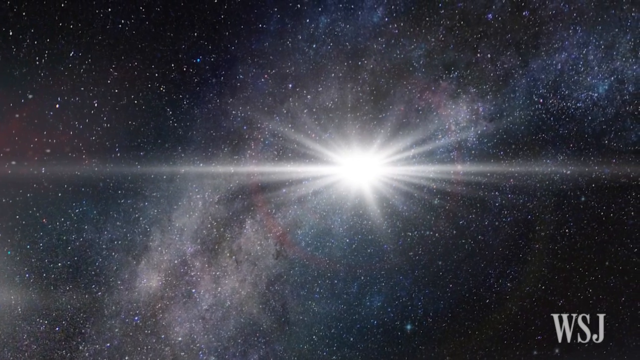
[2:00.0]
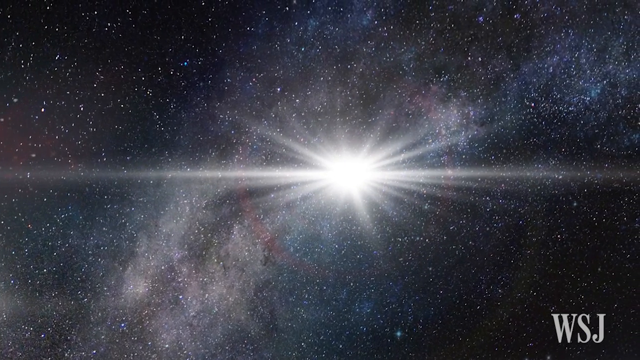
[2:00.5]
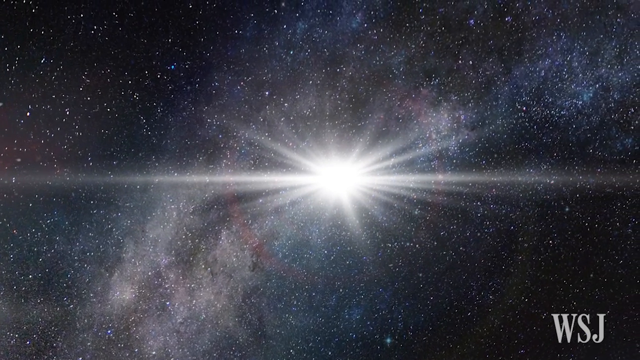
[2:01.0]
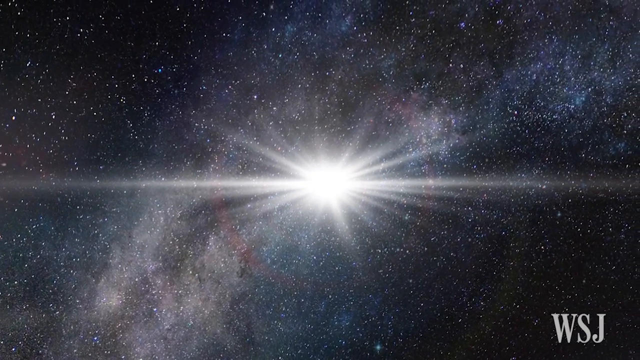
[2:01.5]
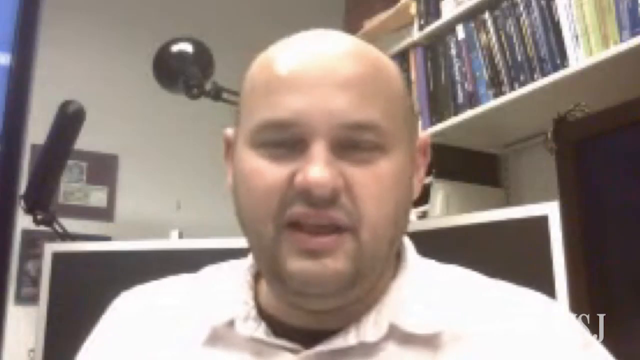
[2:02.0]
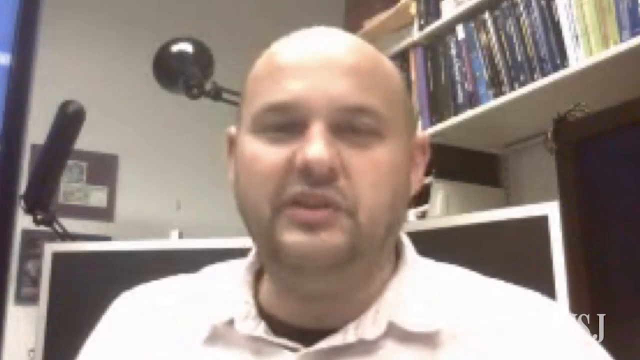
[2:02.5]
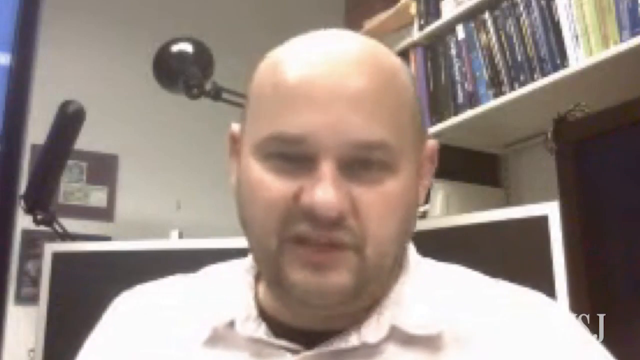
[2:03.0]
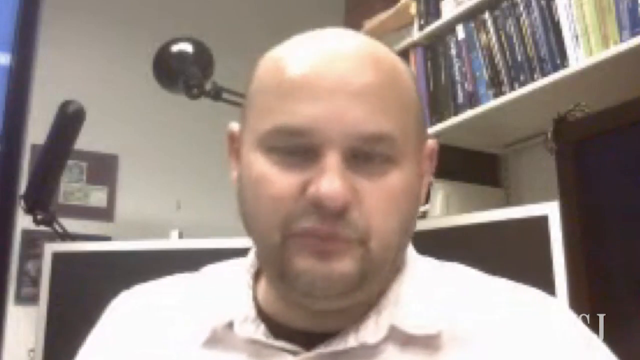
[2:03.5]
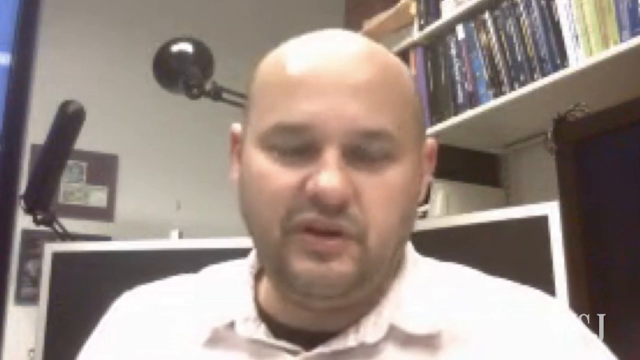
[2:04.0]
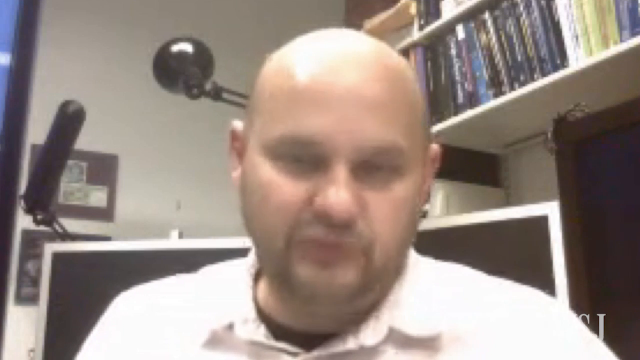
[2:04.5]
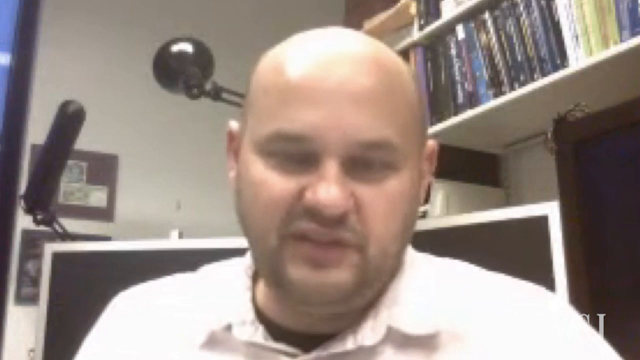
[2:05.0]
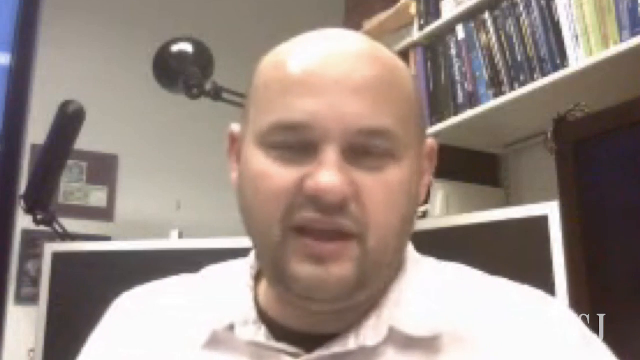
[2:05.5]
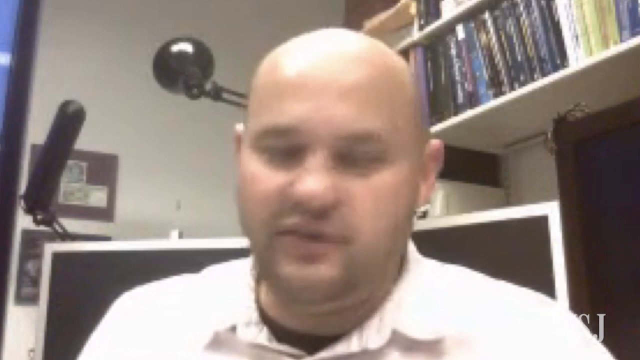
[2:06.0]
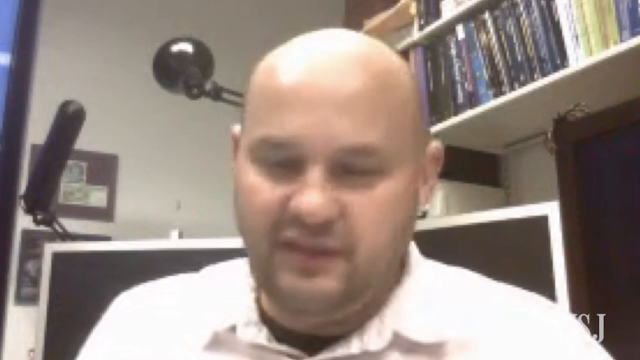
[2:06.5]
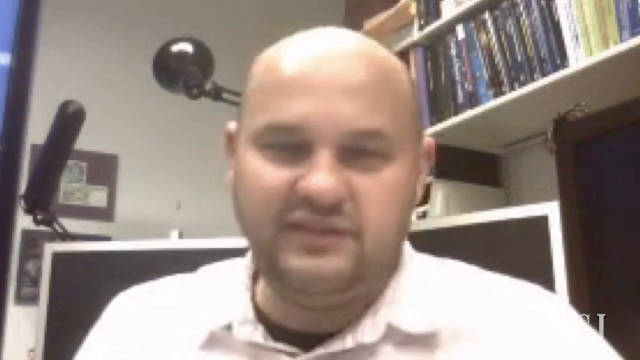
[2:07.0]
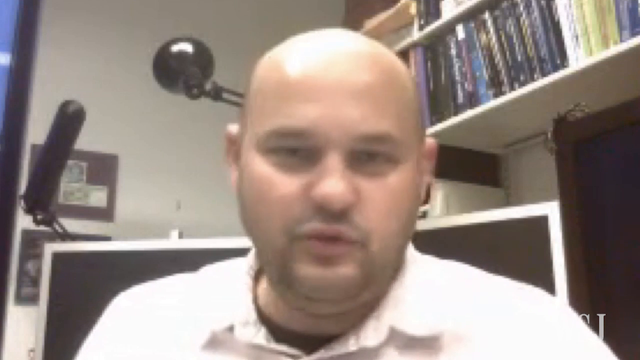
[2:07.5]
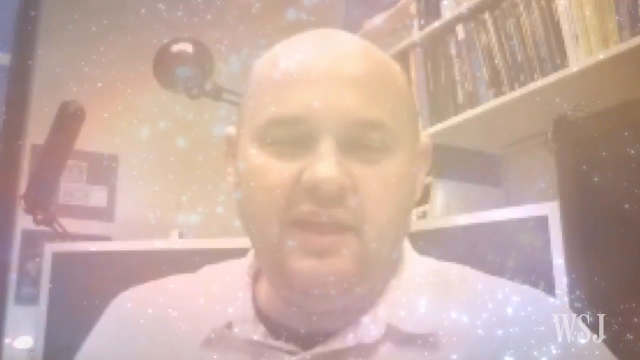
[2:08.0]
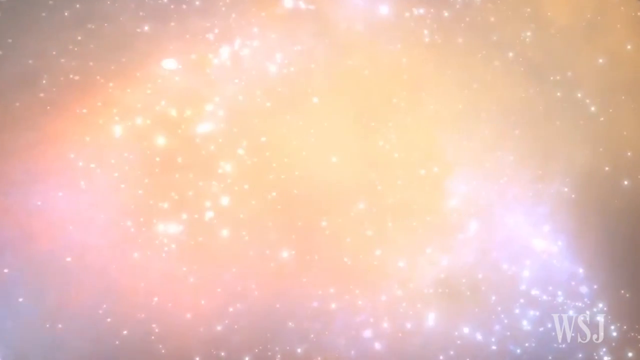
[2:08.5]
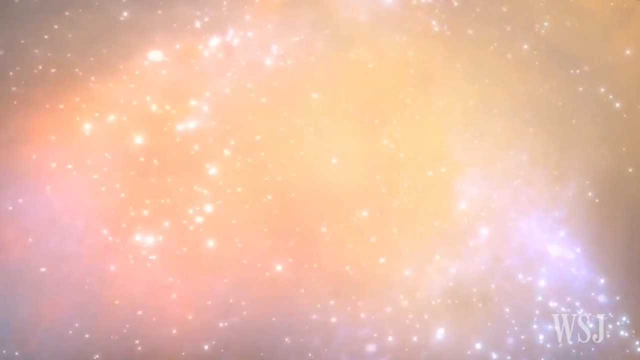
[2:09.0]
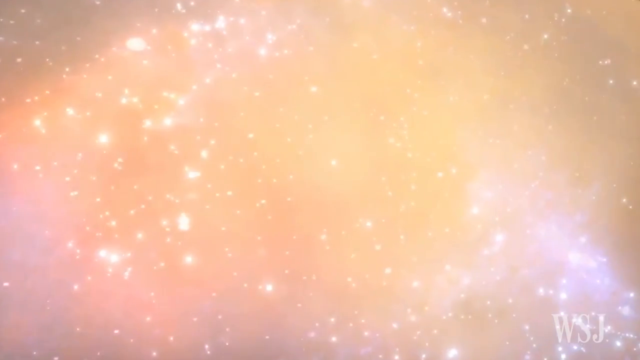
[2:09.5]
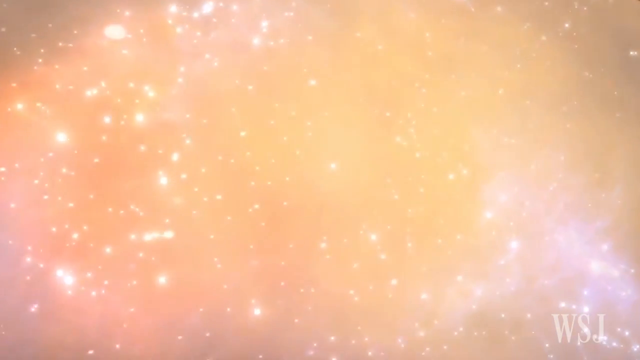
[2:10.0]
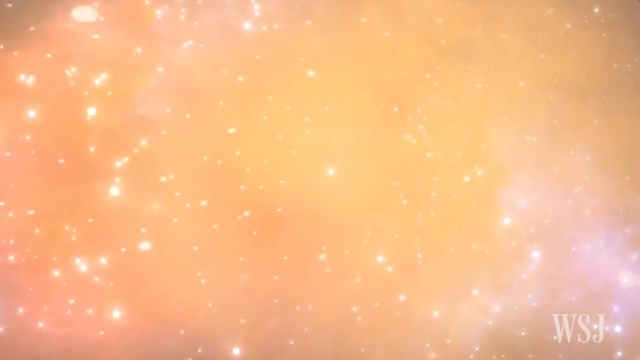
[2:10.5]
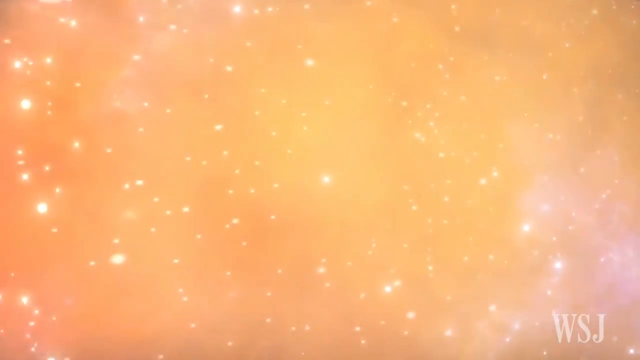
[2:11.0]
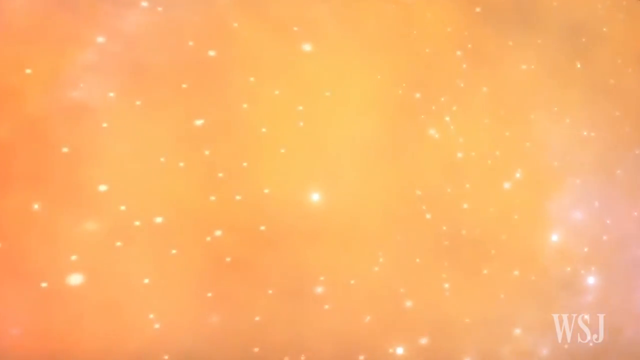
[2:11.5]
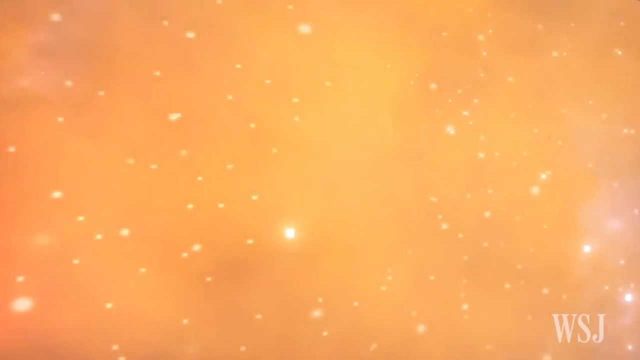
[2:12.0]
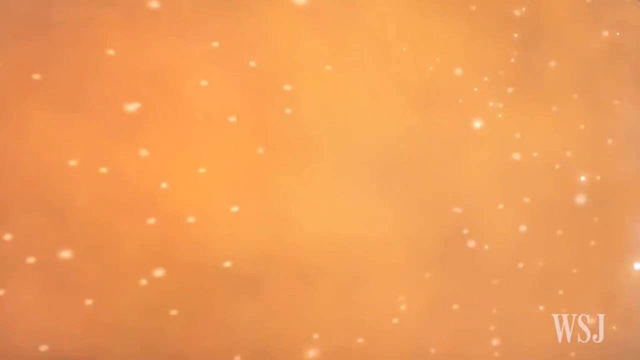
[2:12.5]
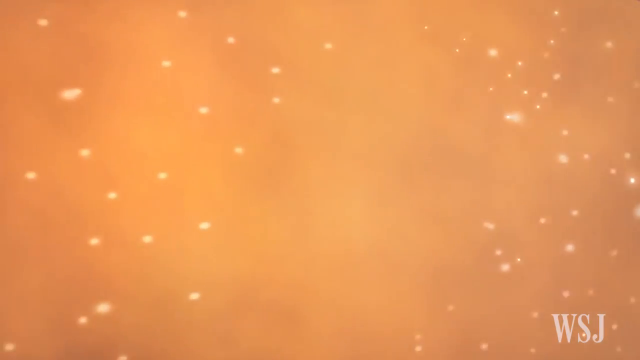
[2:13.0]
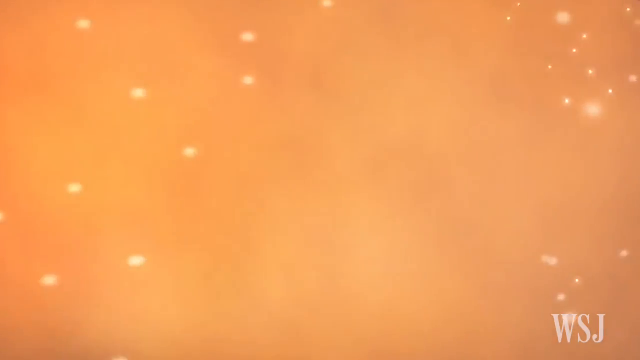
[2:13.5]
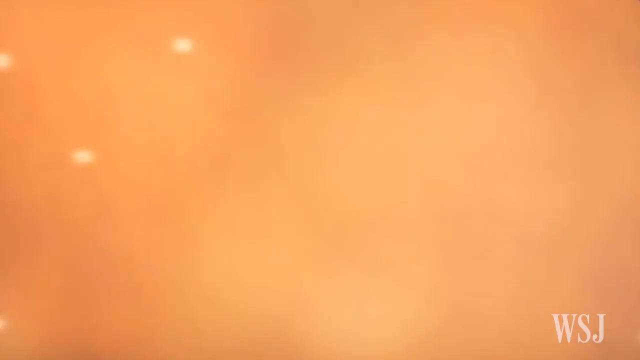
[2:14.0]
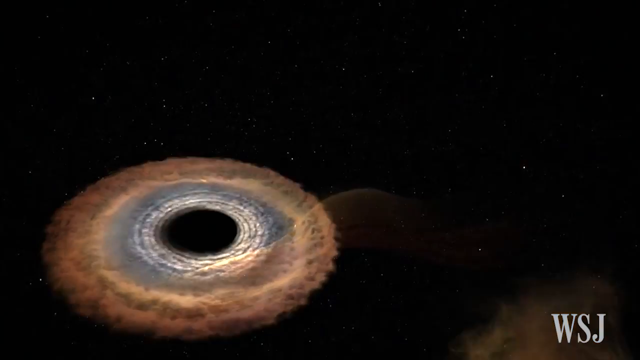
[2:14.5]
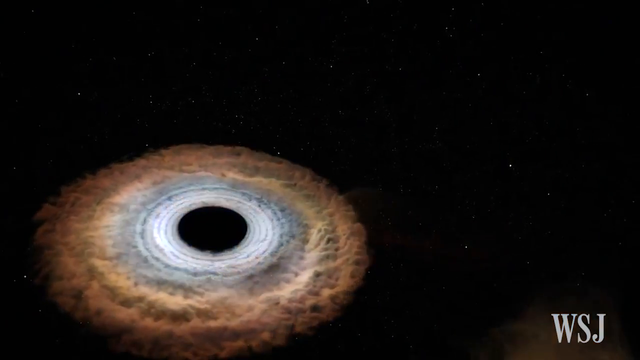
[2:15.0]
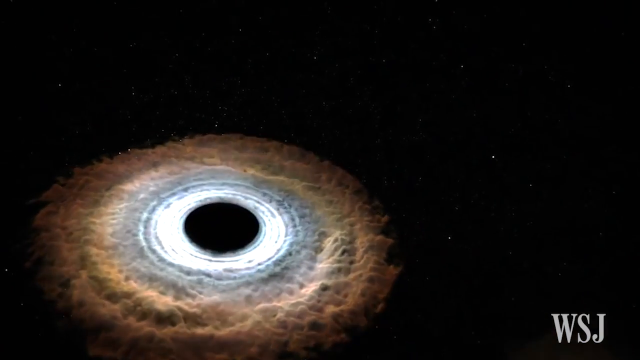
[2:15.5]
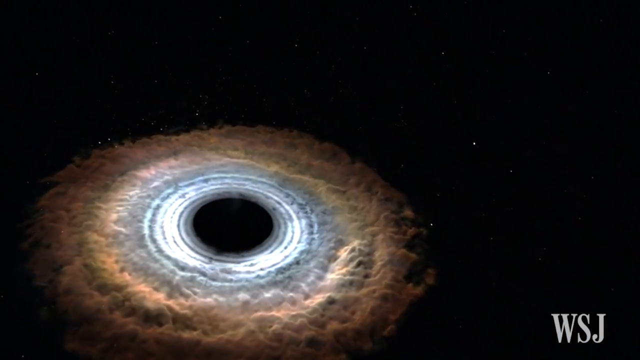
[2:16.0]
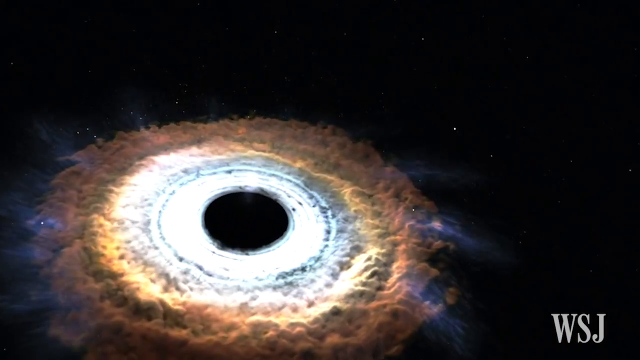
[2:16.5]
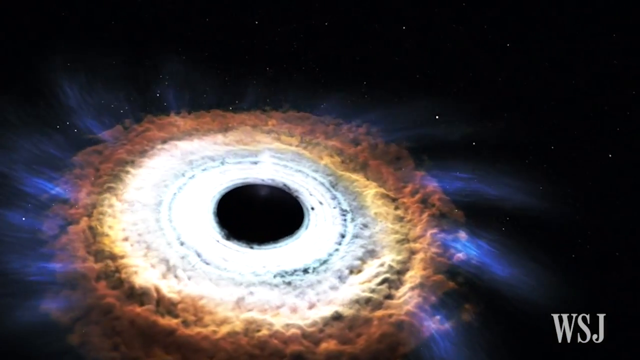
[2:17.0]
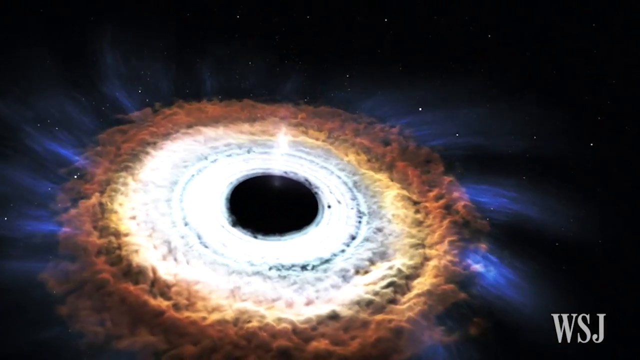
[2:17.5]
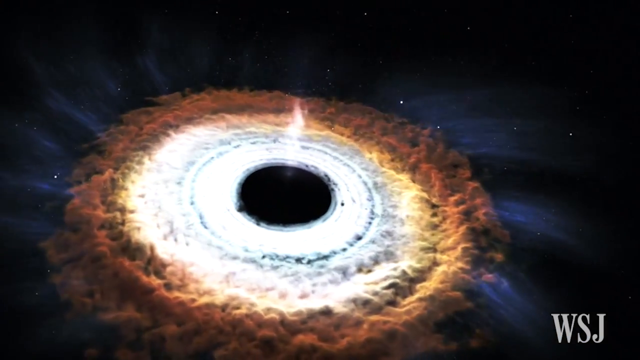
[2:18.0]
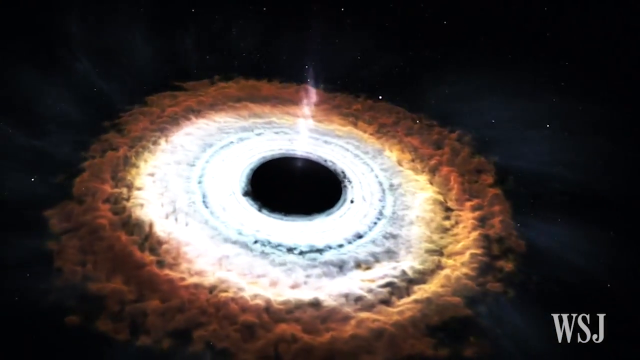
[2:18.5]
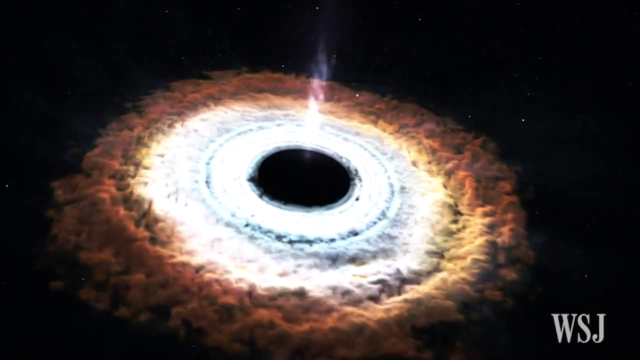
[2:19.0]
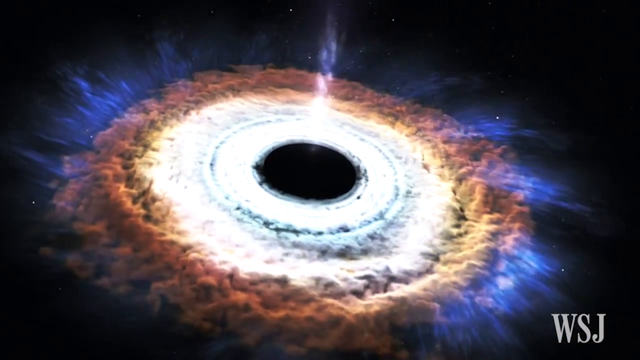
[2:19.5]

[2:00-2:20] The vastness of space is shown, and then the video goes back to the professor from the Ohio State University as the Skype conversation with him continues. A stellar explosion follows; the camera passes through it and then shows a revolving circle drawing in light, possibly a black hole, in a new bit of graphics.